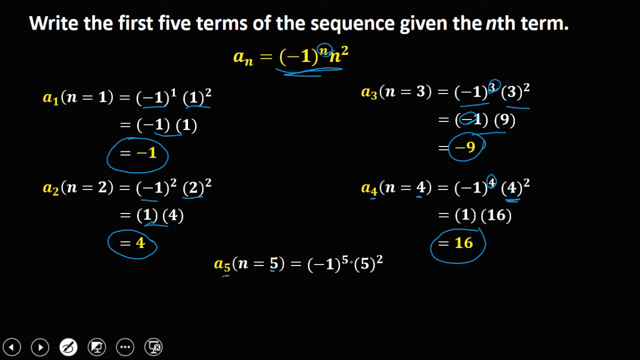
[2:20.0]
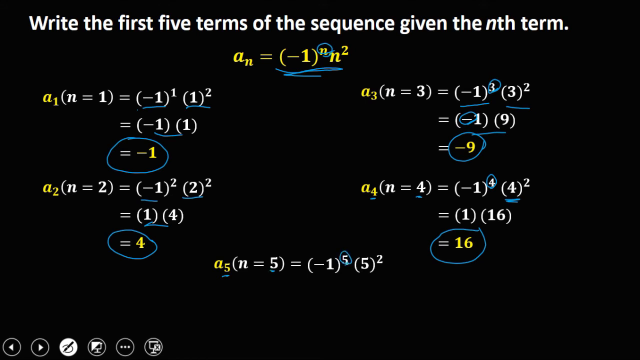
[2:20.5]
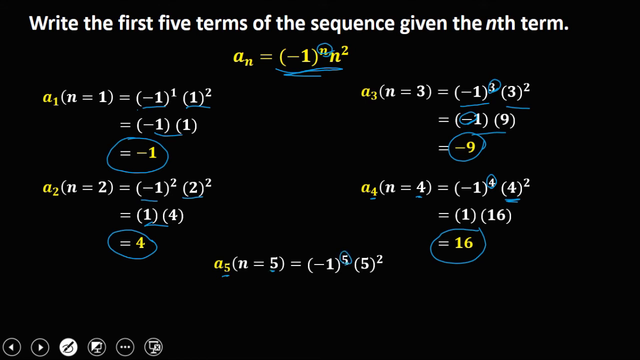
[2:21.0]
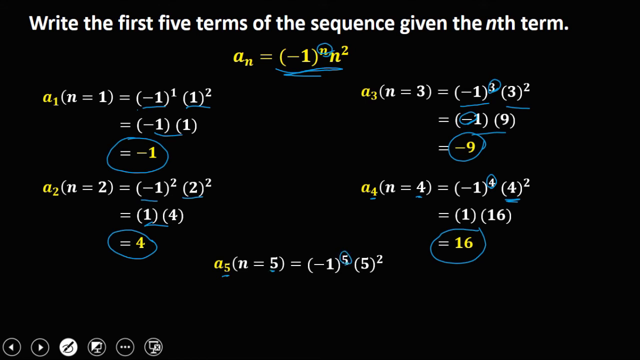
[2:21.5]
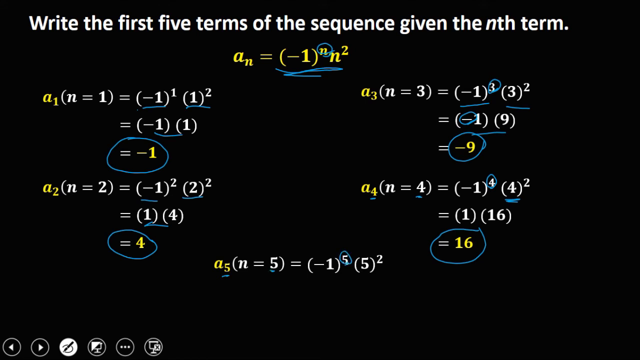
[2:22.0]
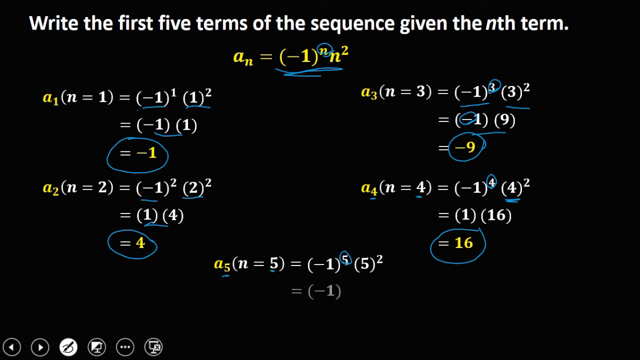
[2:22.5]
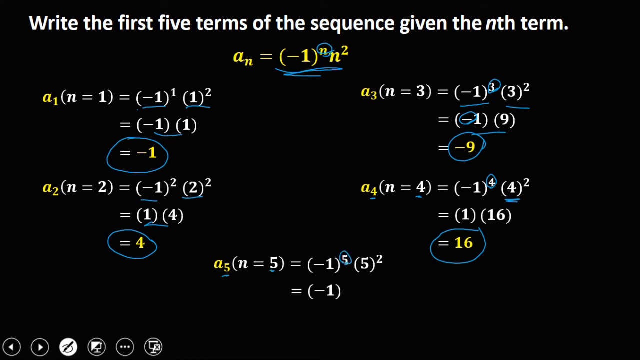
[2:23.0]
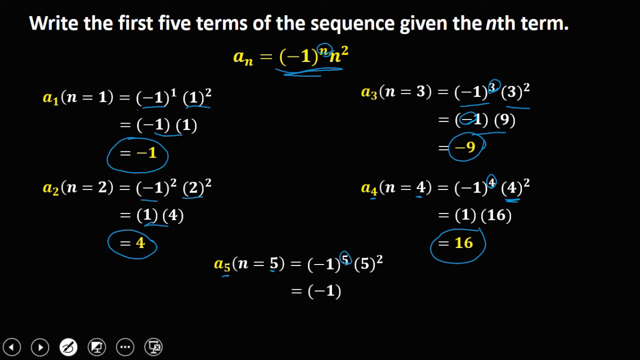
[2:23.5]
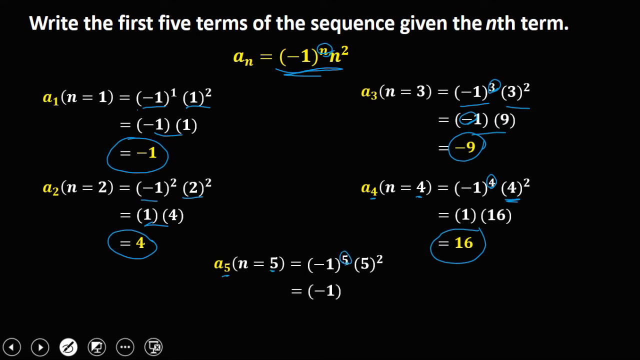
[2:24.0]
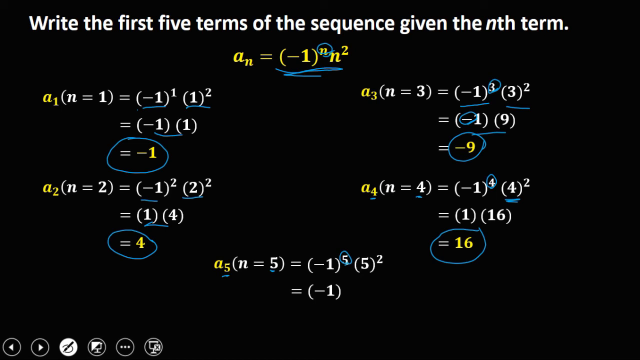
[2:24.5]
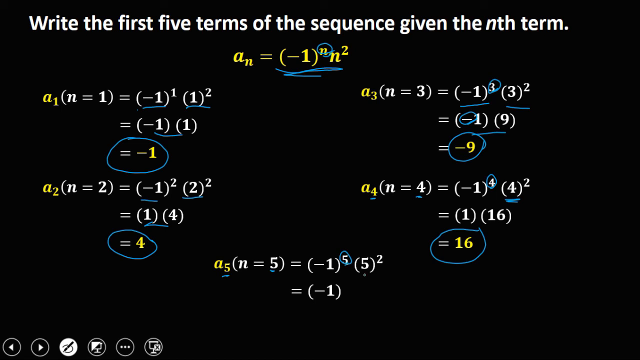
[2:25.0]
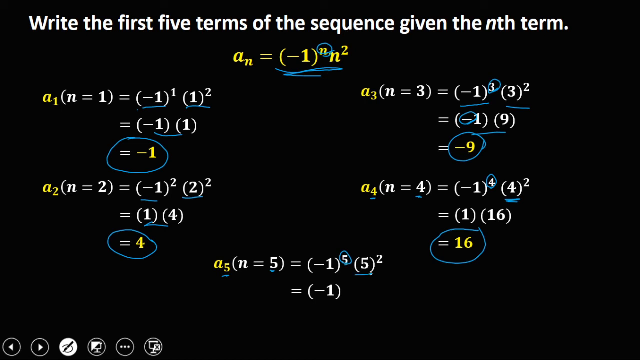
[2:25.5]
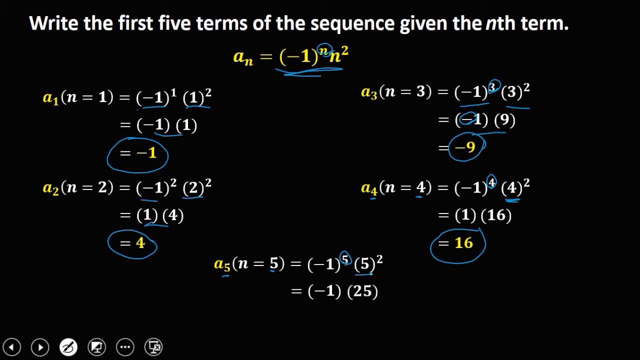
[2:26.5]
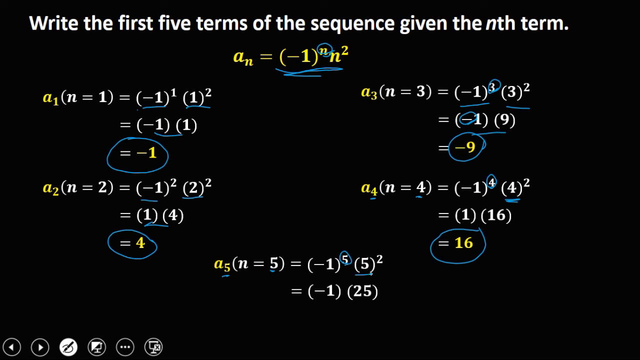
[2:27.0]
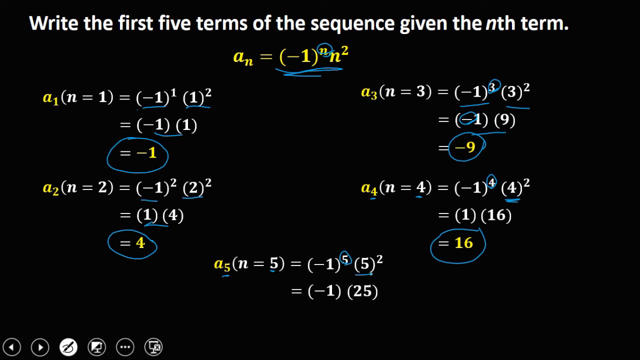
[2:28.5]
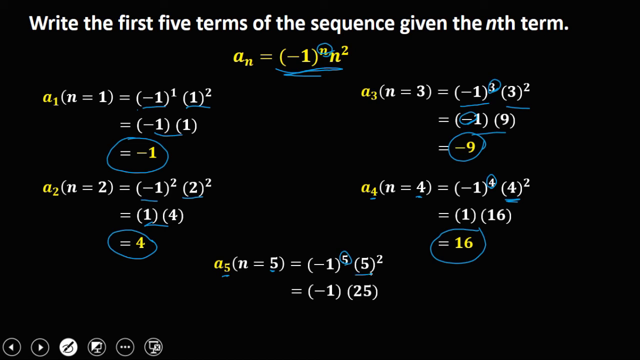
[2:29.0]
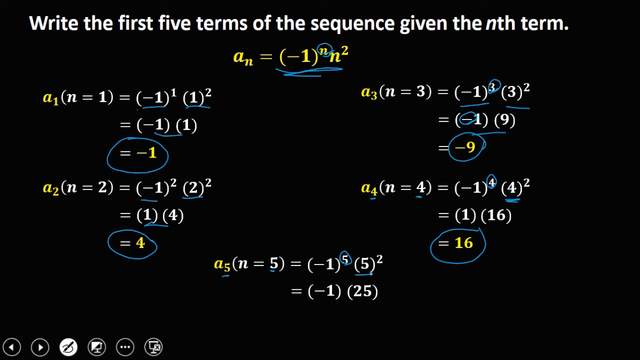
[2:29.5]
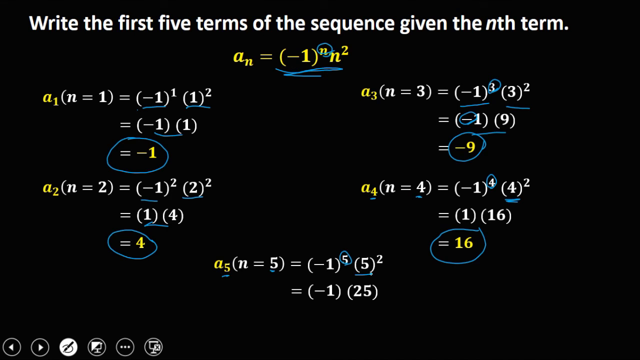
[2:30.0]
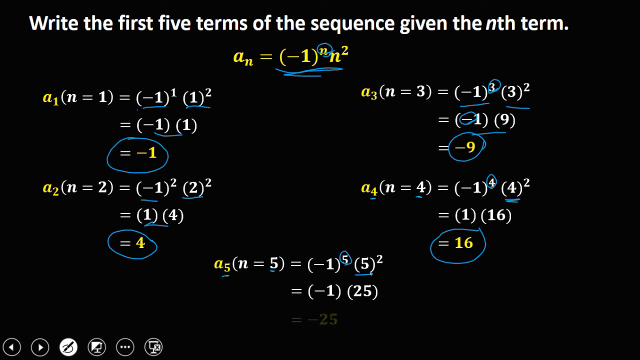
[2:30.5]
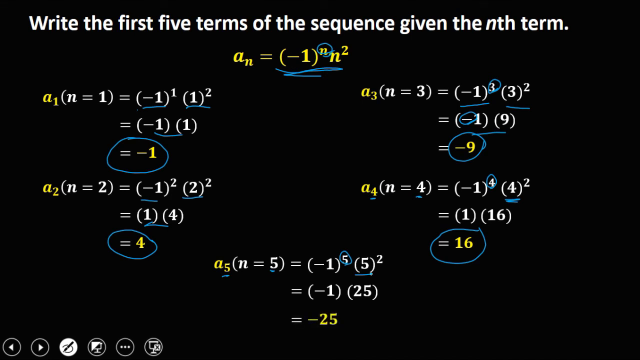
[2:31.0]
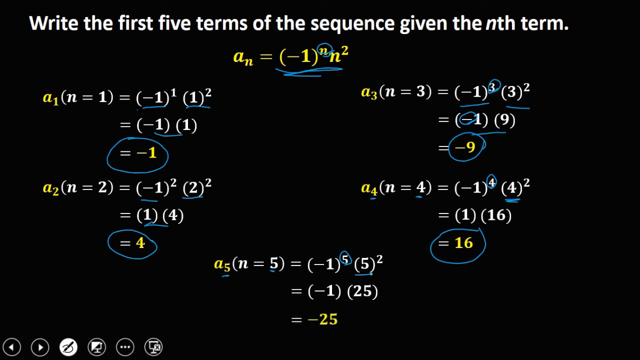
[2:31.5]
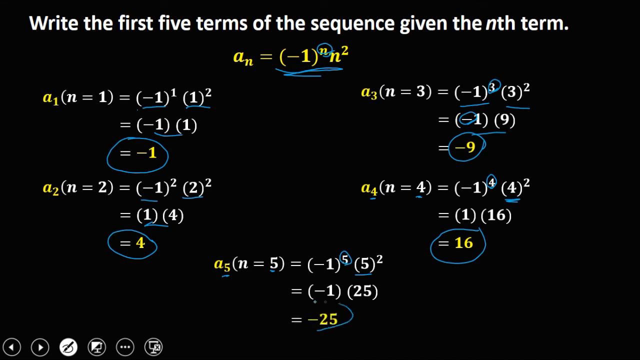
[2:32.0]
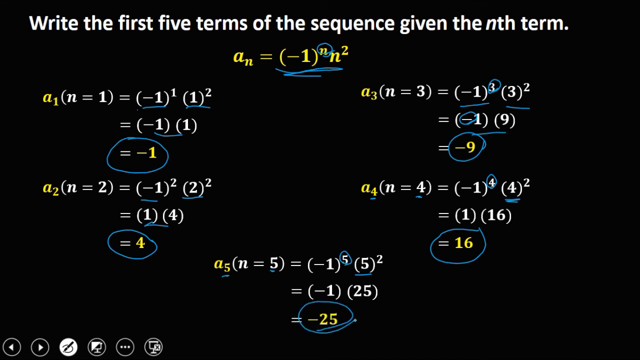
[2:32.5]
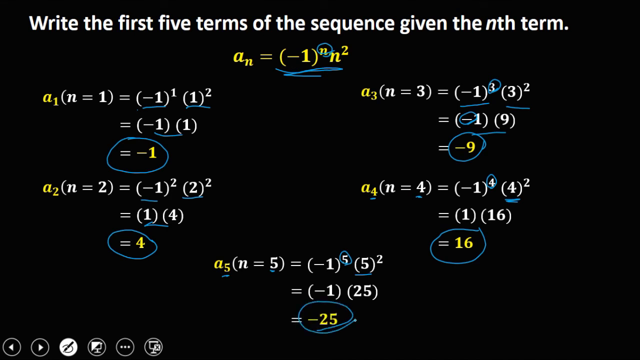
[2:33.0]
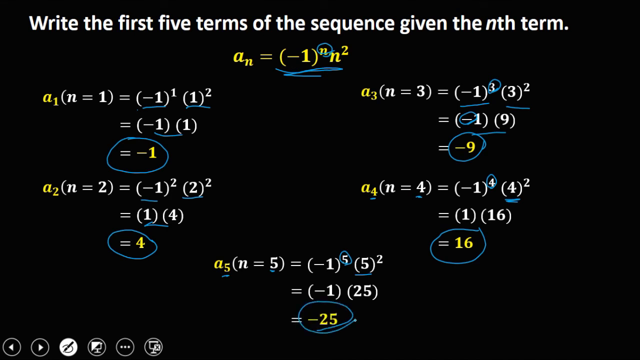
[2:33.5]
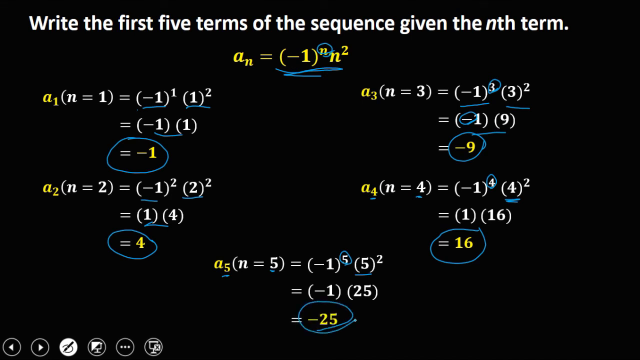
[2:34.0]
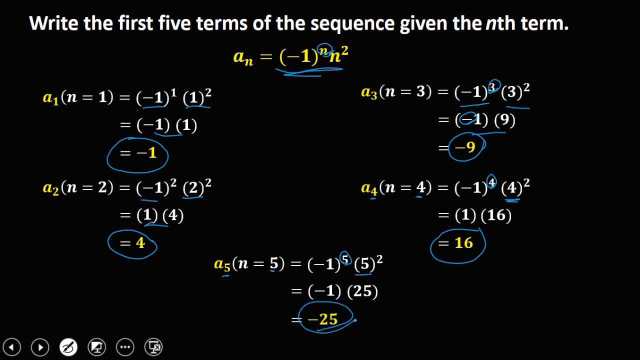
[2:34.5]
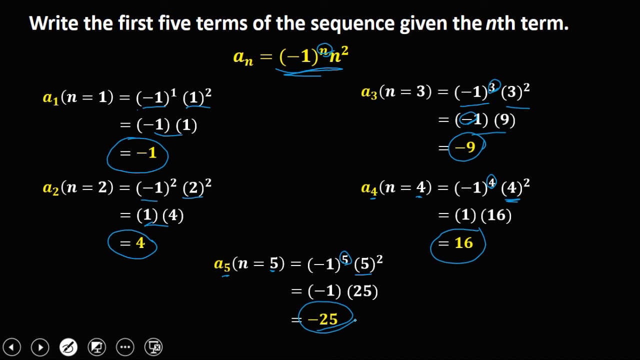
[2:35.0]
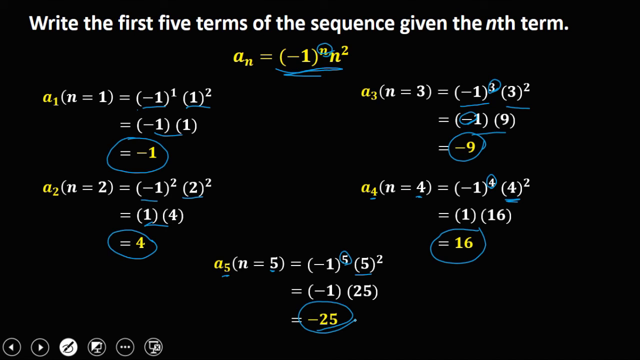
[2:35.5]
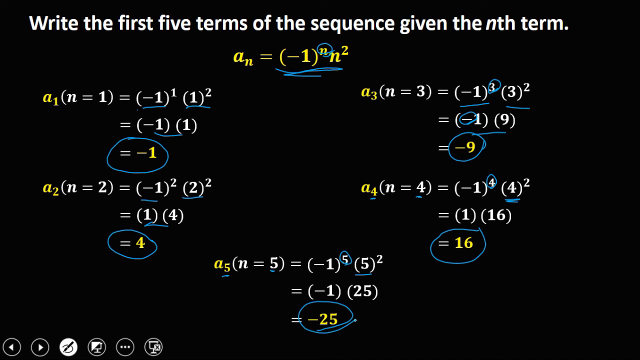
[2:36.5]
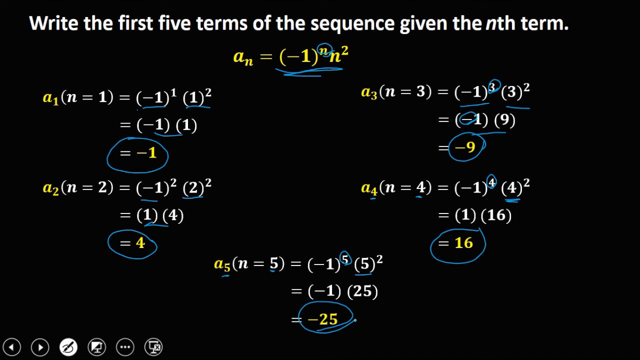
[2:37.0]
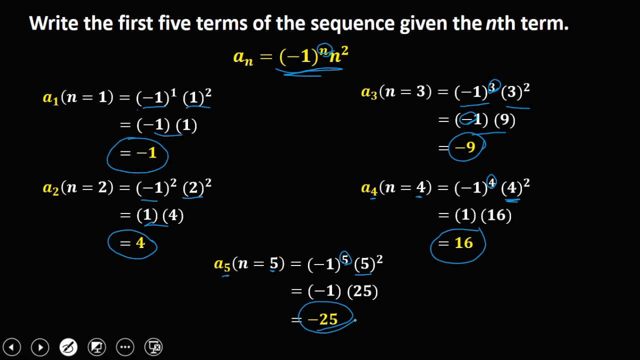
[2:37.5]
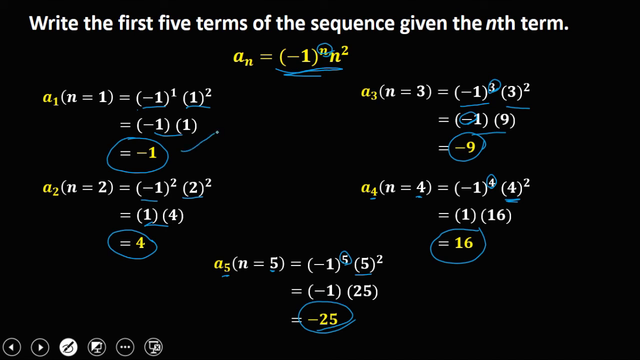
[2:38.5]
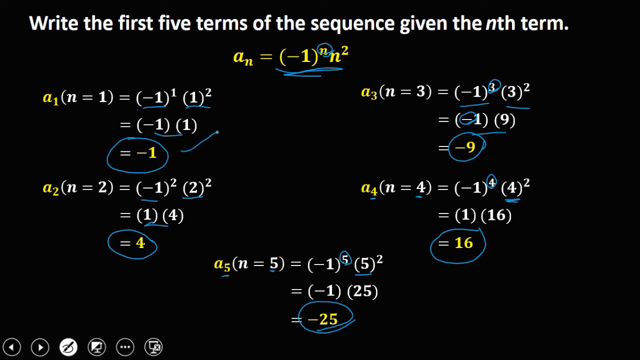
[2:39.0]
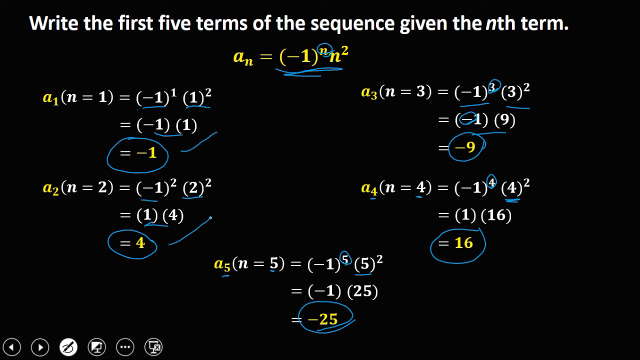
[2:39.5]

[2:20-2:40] The tutorial reviews all five terms for the rule a subscript n equals negative 1 to the nth power multiplied by n squared: the first term is negative 1, the second is 4, the third is negative 9, the fourth is 16, and the fifth is negative 25. It points out that the terms alternate between negative and positive numbers.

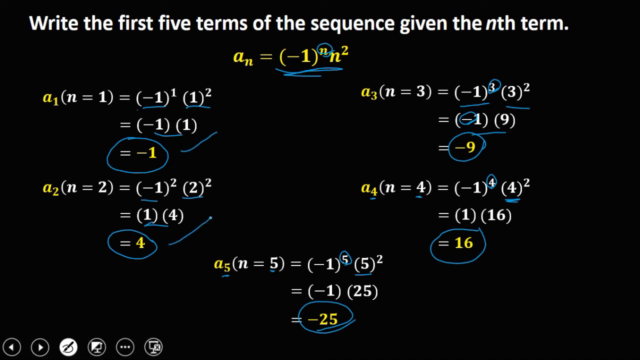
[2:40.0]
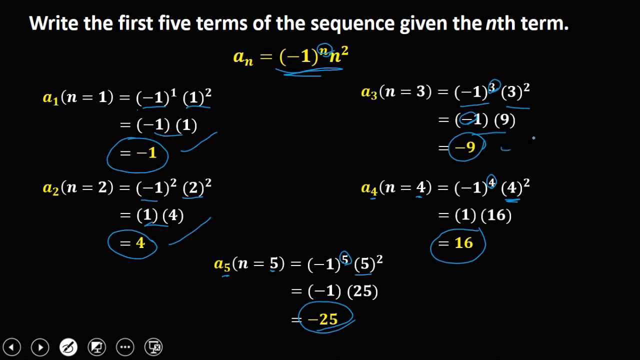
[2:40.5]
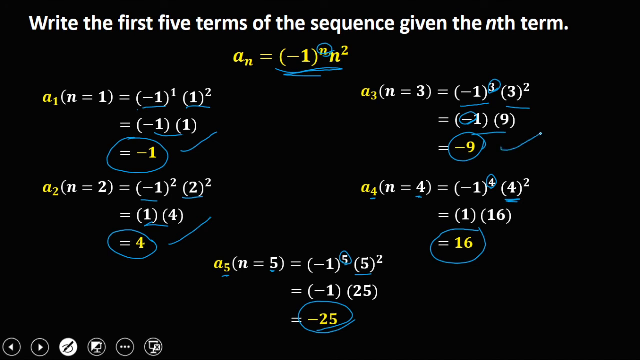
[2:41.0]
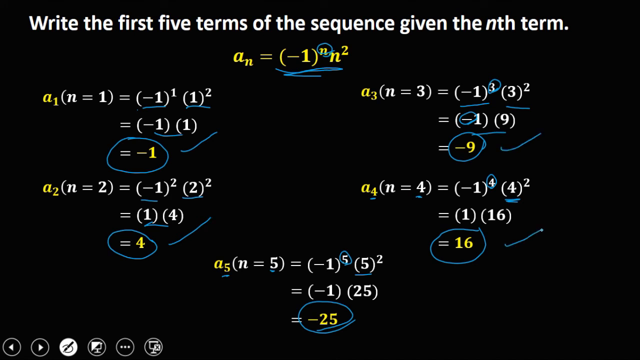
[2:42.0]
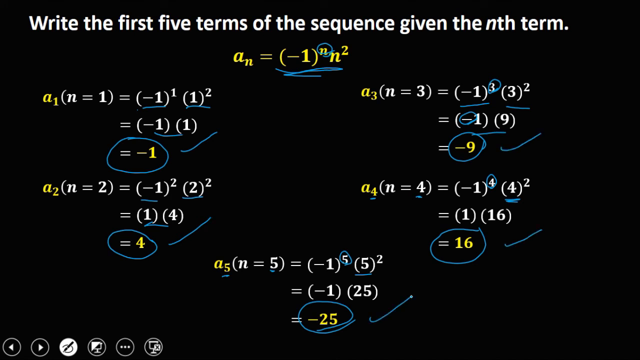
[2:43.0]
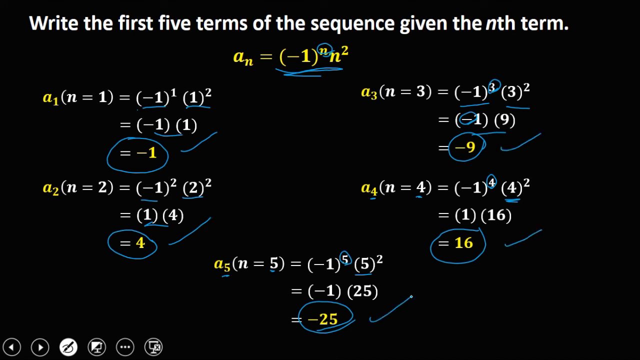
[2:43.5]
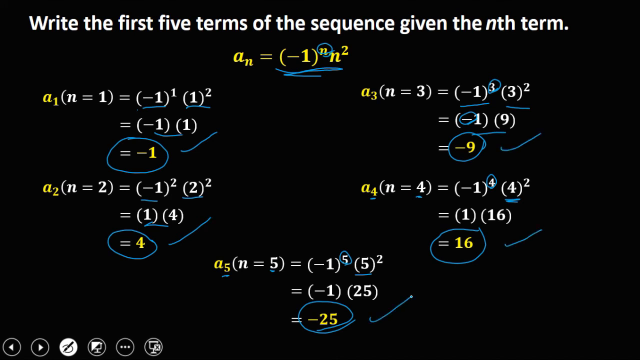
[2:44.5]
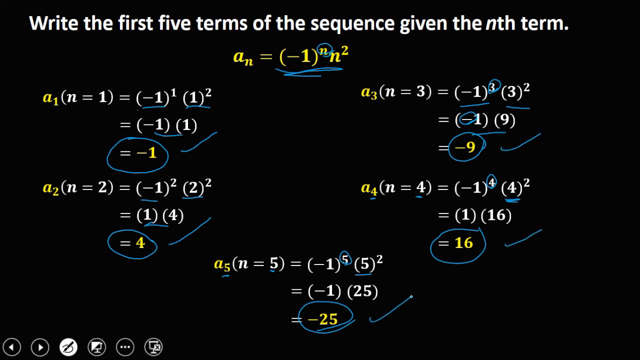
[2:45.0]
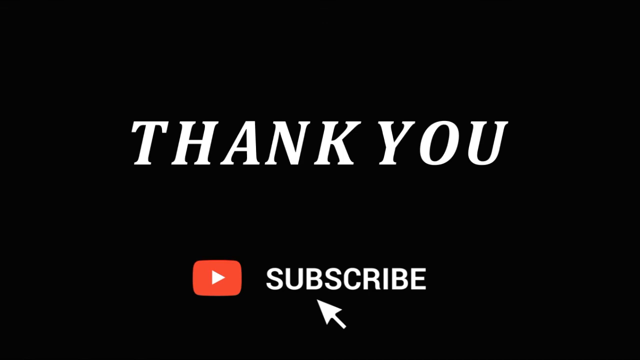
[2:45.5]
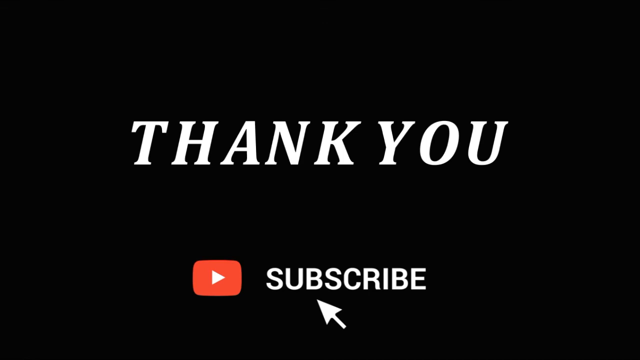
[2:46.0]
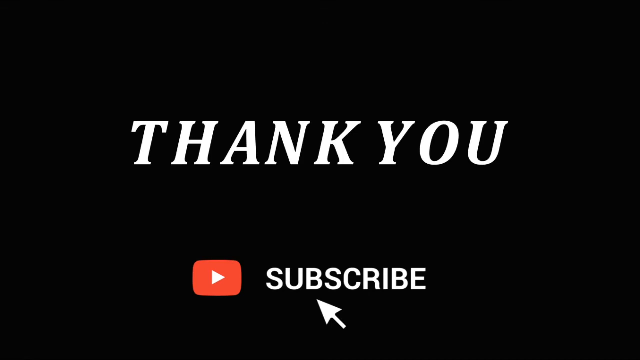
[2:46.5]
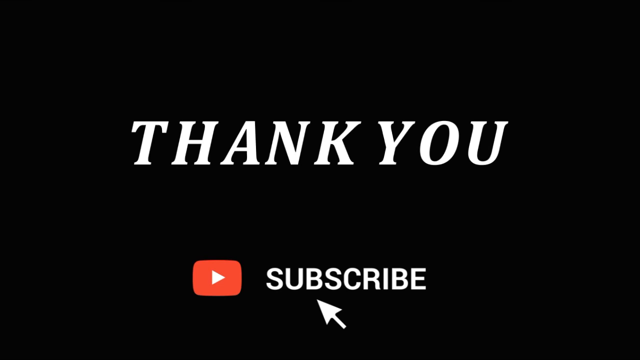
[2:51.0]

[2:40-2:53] The tutorial wraps up the sequence a subscript n equals negative 1 to the nth power multiplied by n squared. The values of the first five terms are negative 1, 4, negative 9, 16 and negative 25. The terms alternate between negative and positive: the first, third and fifth terms are negative, and the second and fourth terms are positive, with a sixth term predicted to be positive.